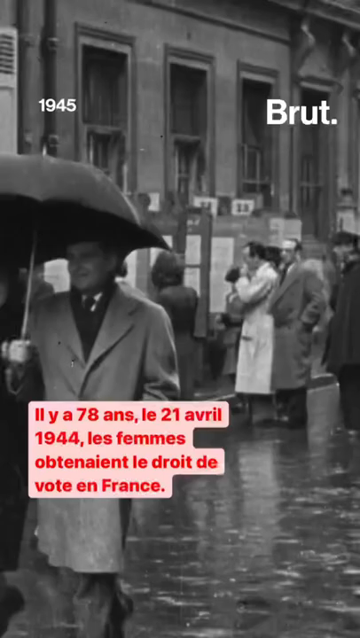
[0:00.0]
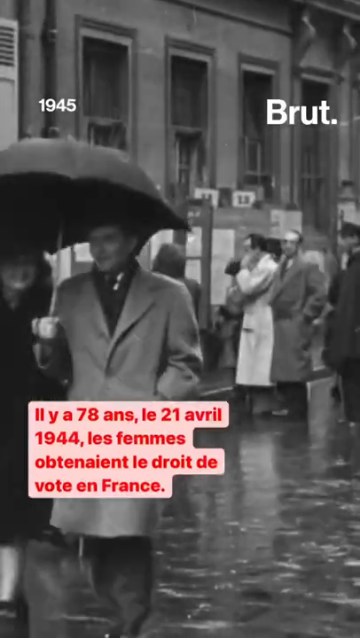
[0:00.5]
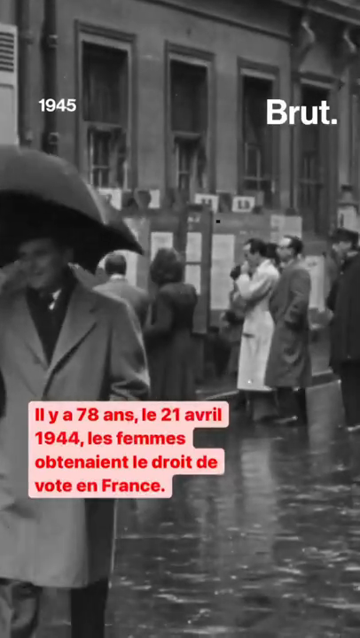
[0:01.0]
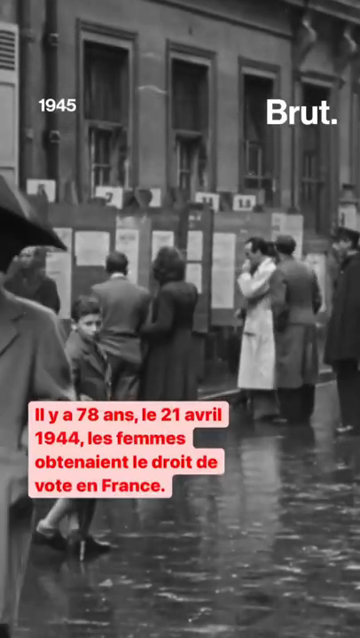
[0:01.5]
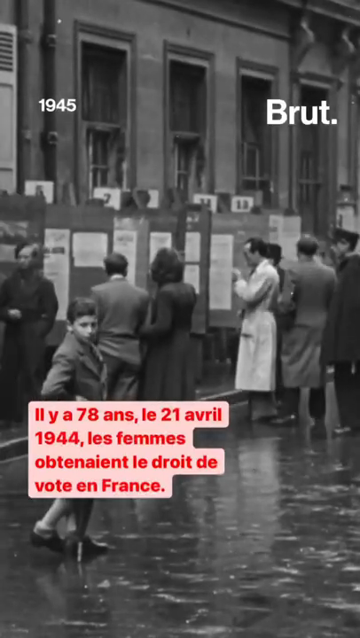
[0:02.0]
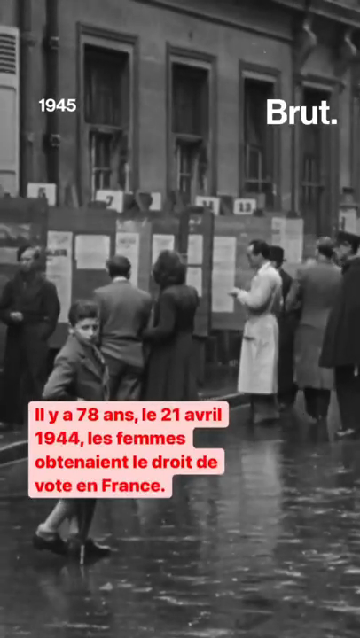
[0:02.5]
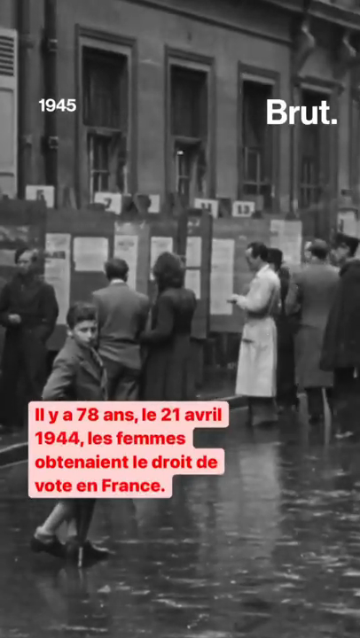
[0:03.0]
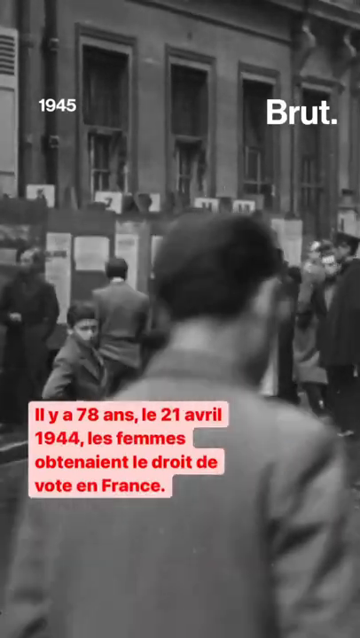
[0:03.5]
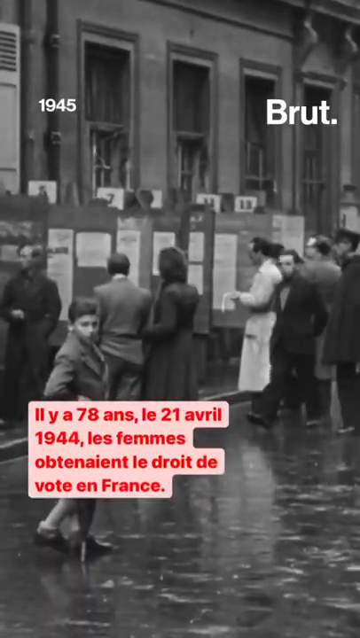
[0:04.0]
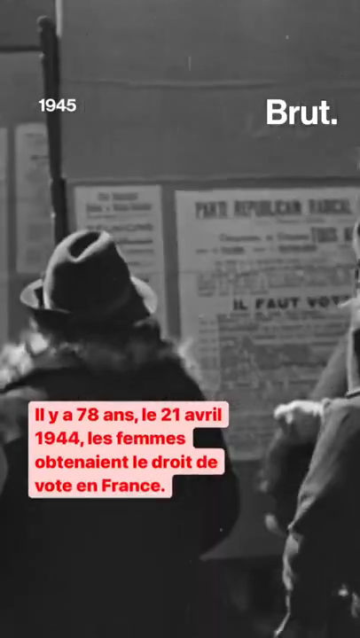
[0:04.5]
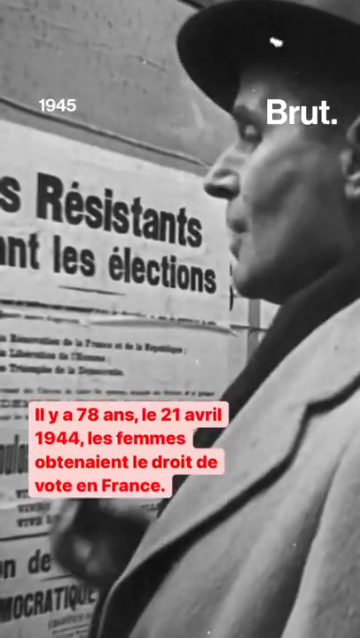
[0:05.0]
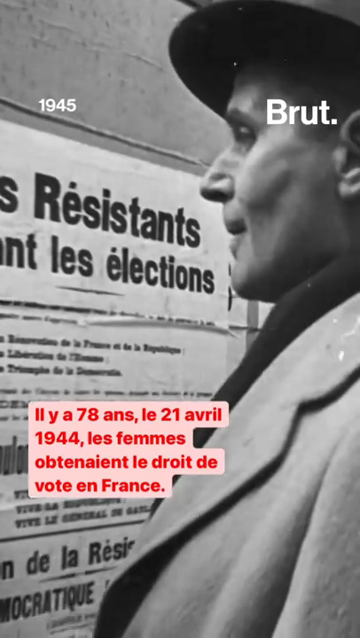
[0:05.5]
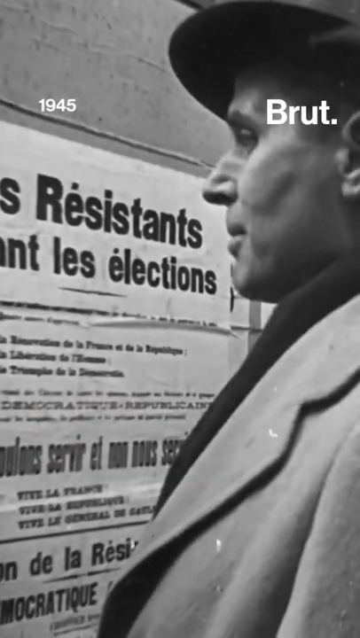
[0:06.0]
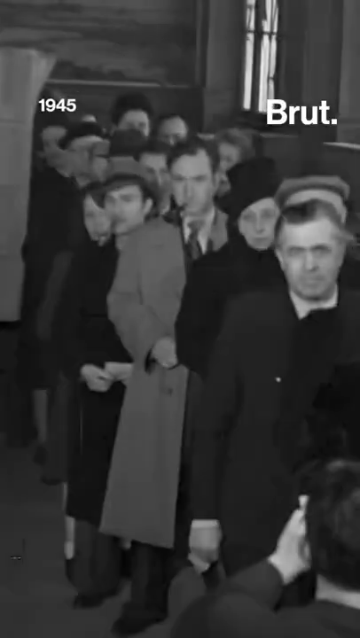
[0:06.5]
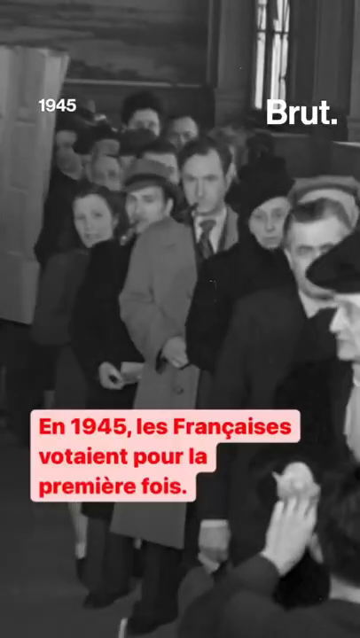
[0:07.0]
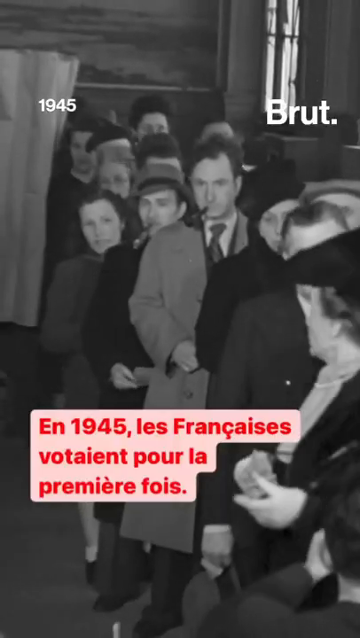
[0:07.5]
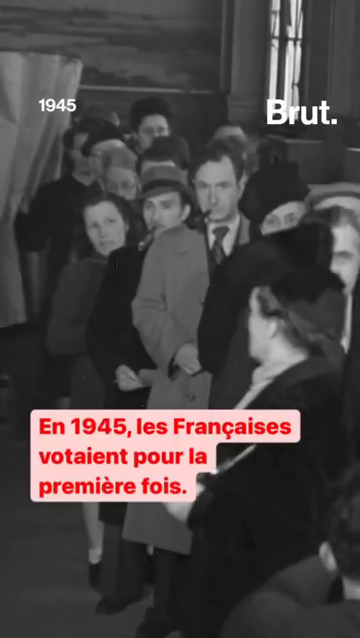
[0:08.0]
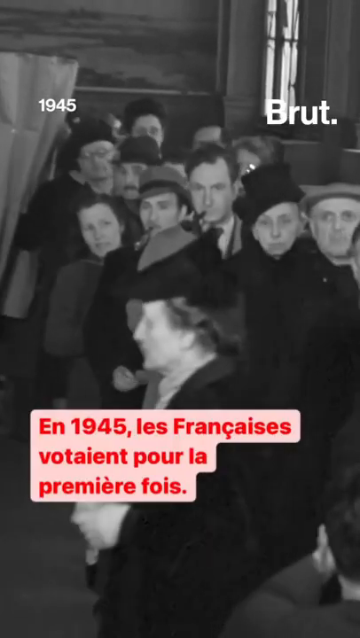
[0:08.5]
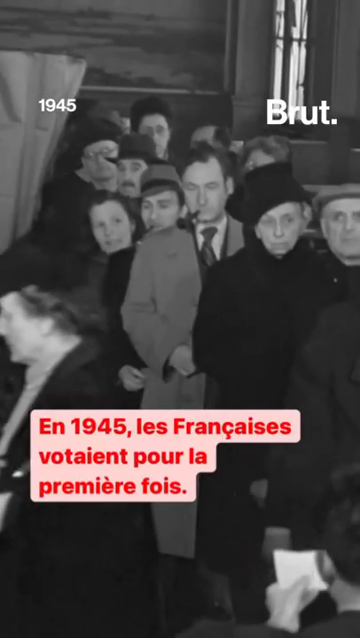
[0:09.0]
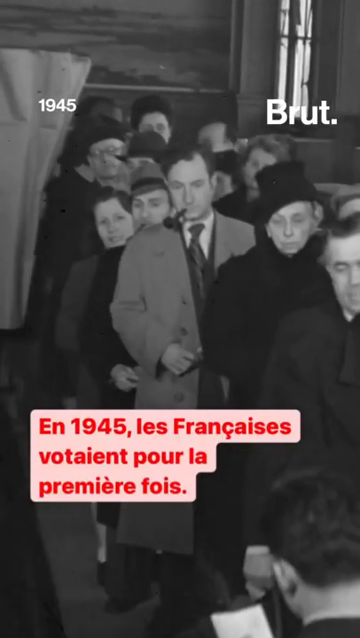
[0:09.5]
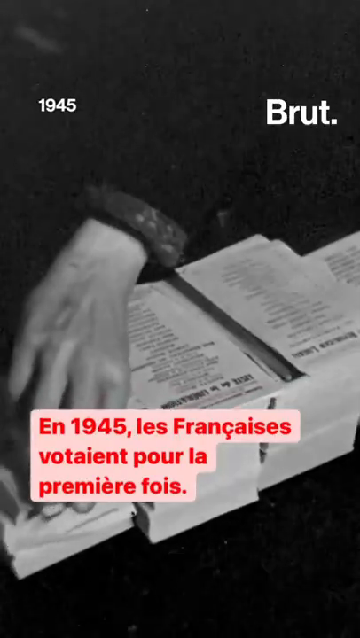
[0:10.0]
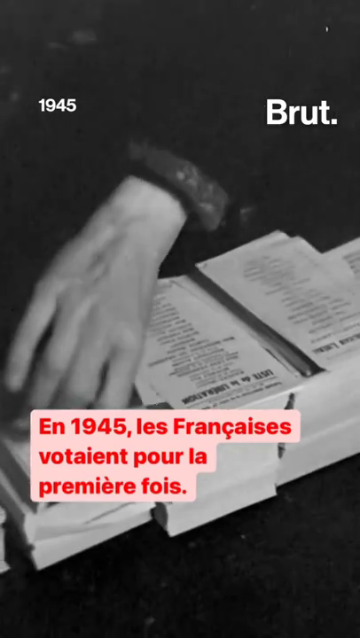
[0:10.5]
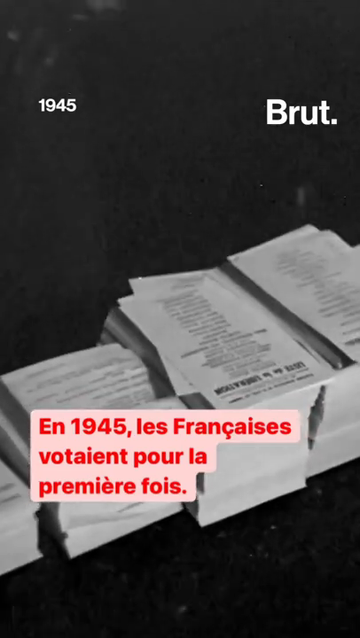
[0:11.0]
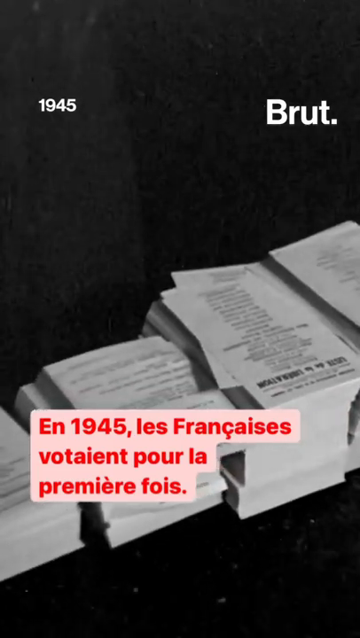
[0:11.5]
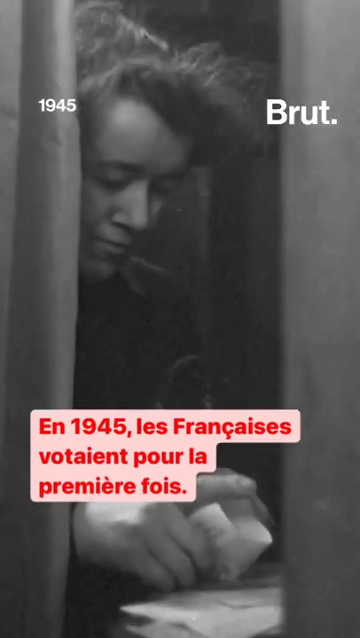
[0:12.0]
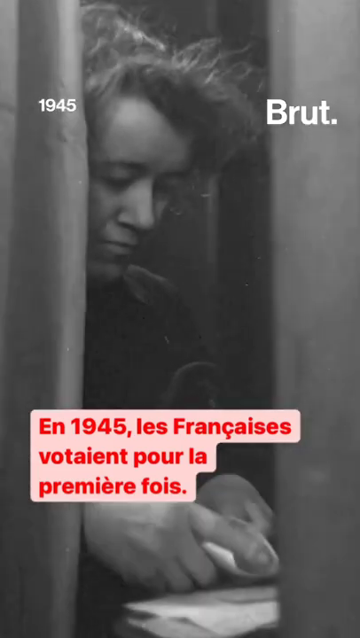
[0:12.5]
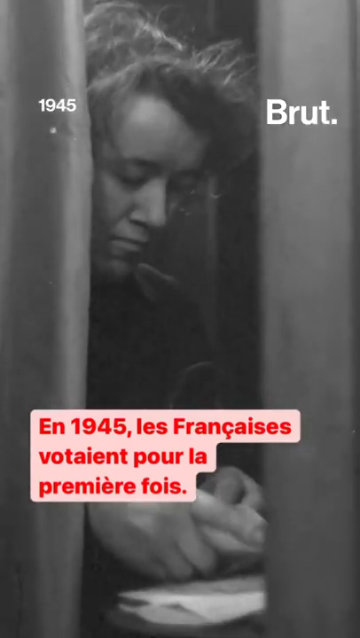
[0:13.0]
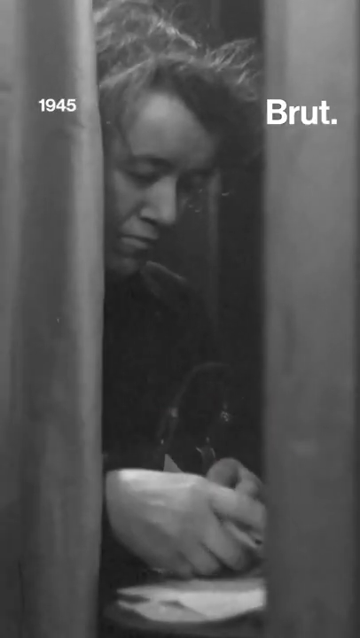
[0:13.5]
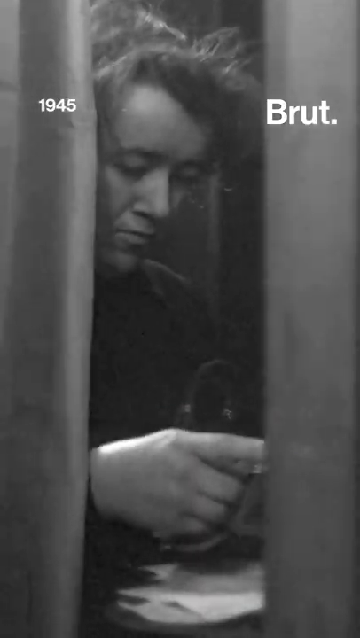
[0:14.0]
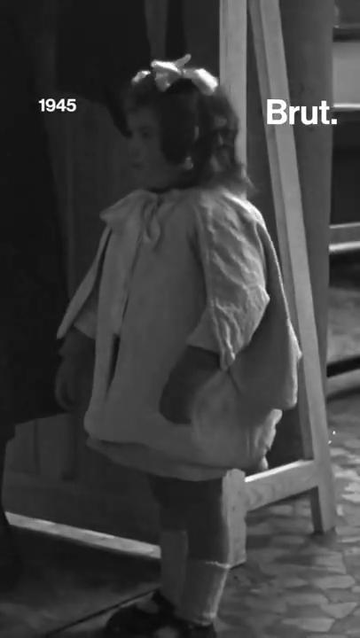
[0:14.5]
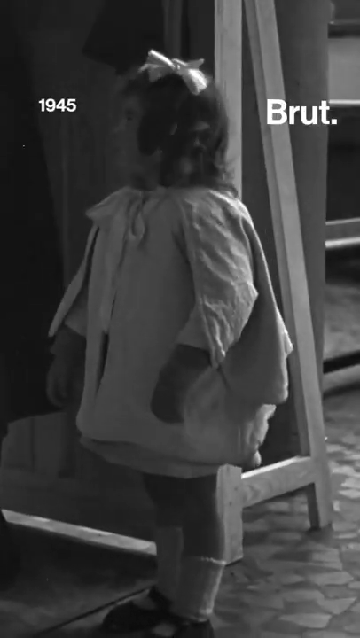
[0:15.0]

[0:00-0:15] People stand on a street in France in 1945, lined up to vote. The weather is wet, and there are boards with signs pasted on them about the elections that are taking place or about to take place. People are shown lined up to vote and being handed ballots, and people in voting booths put their ballots into envelopes, apparently to return them to the election judges. Some of the people may be looking at the boards for election outcomes, which were posted on boards like news boards to show who had won a recent election.